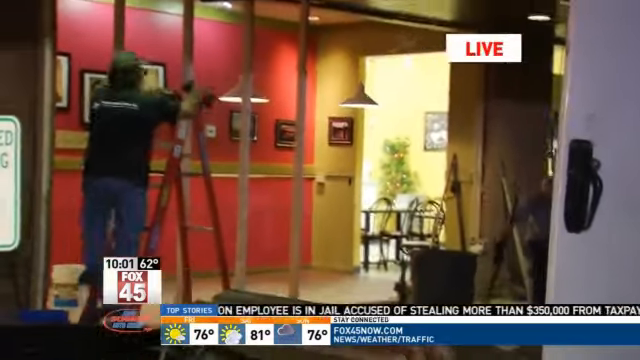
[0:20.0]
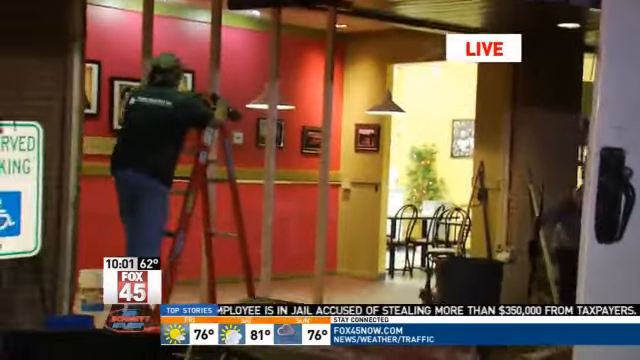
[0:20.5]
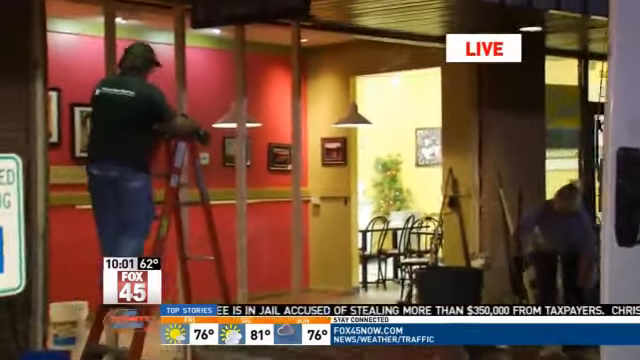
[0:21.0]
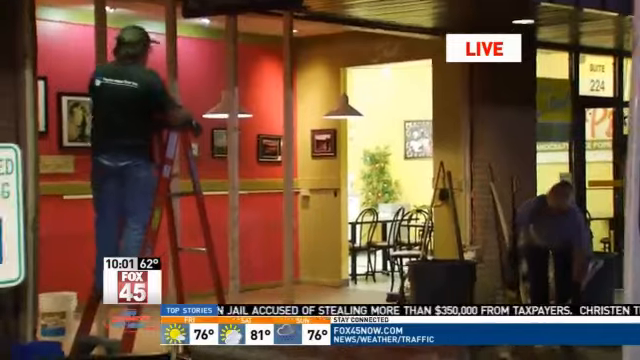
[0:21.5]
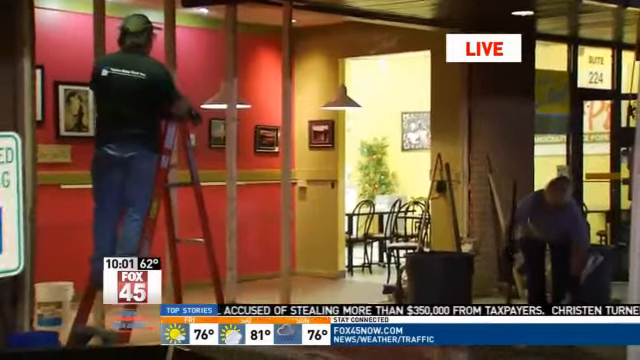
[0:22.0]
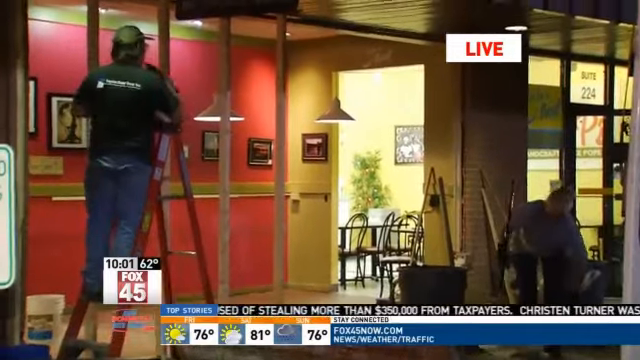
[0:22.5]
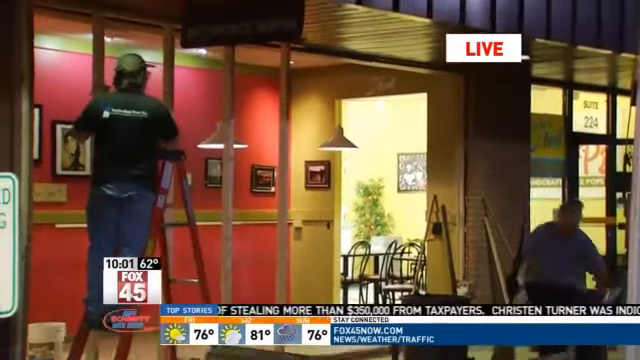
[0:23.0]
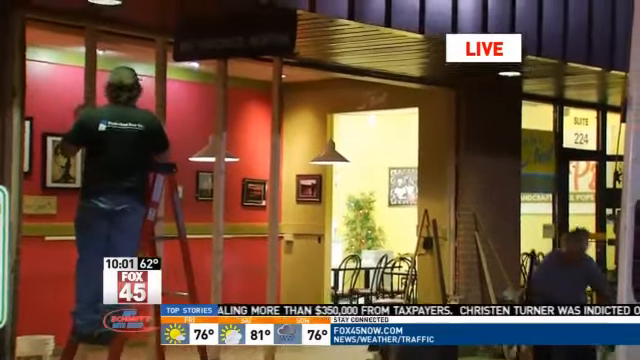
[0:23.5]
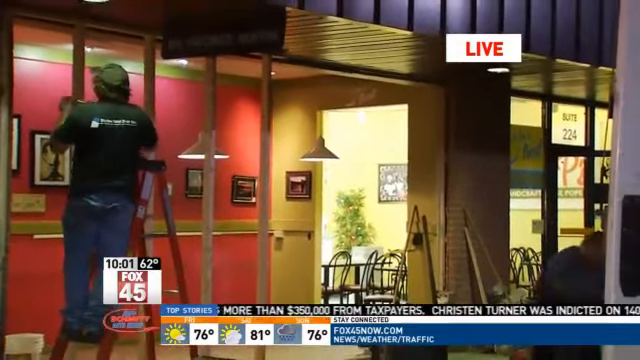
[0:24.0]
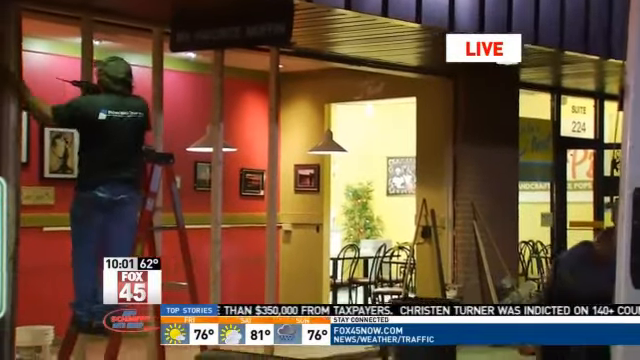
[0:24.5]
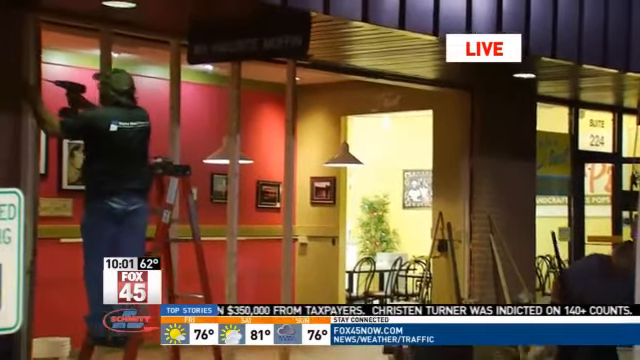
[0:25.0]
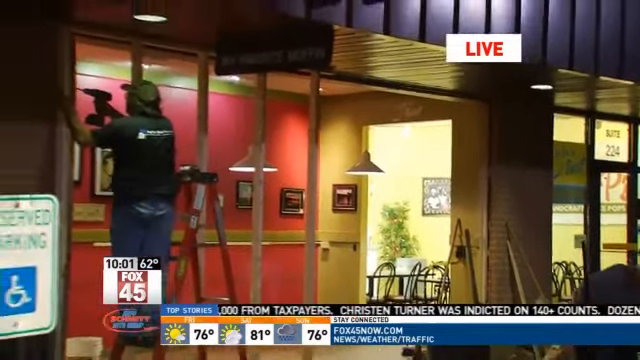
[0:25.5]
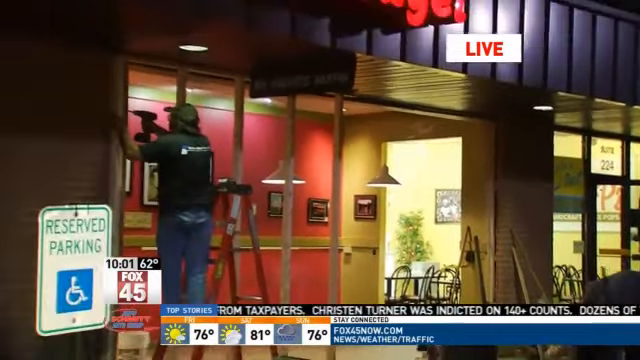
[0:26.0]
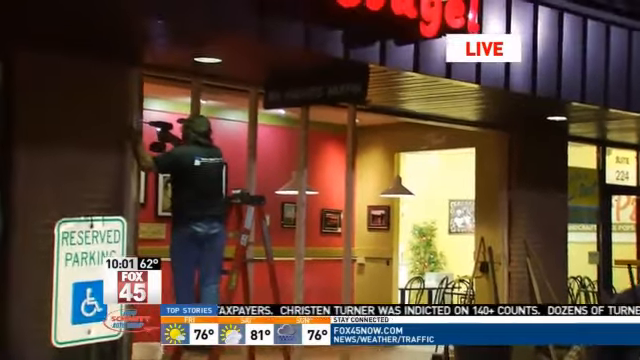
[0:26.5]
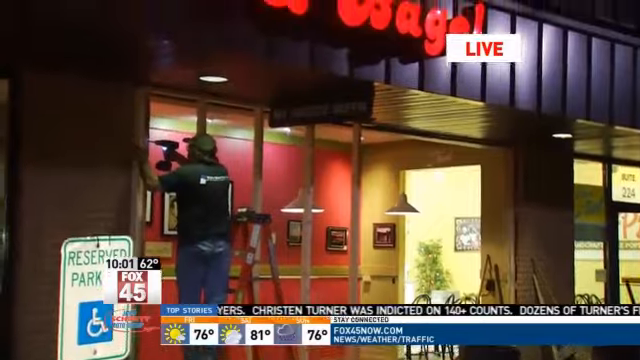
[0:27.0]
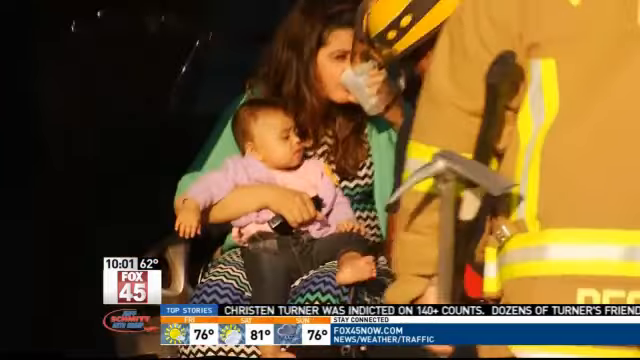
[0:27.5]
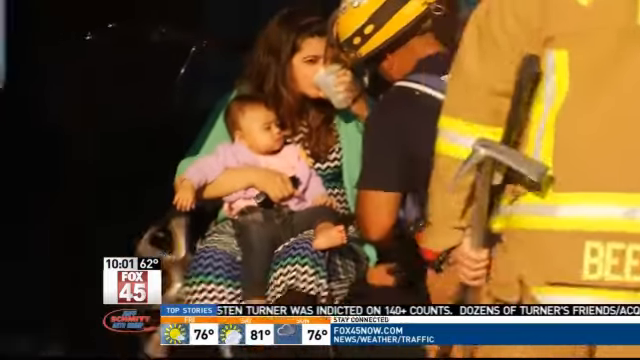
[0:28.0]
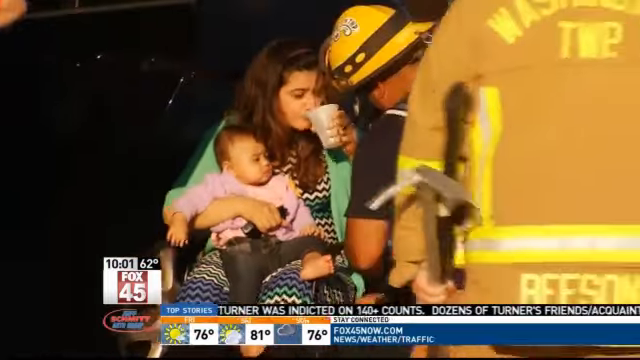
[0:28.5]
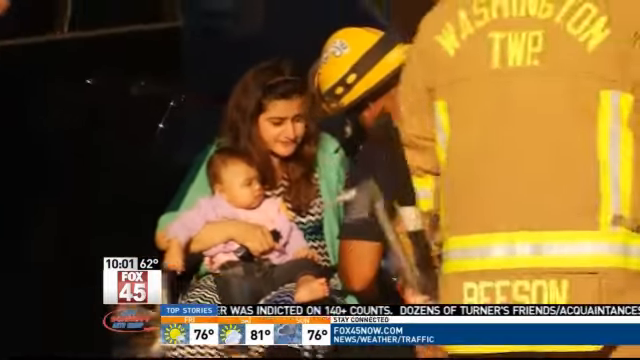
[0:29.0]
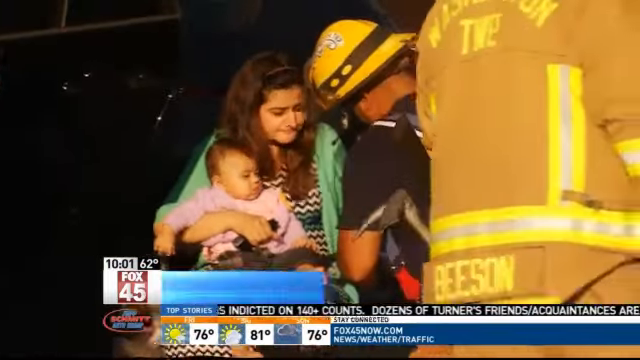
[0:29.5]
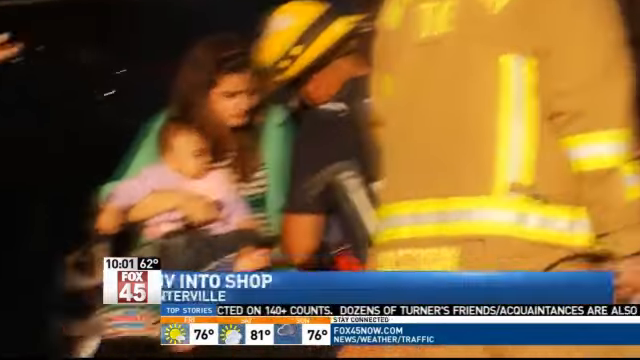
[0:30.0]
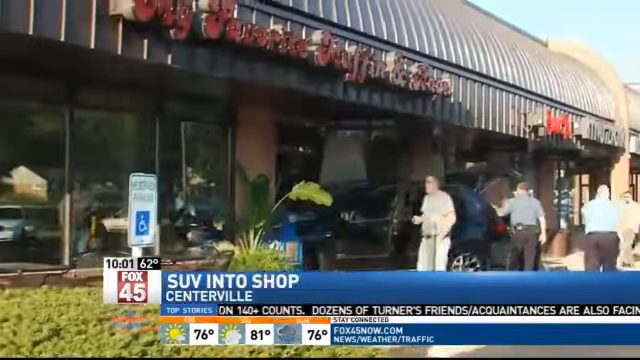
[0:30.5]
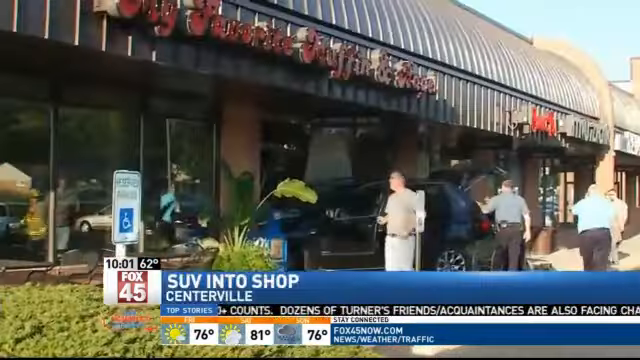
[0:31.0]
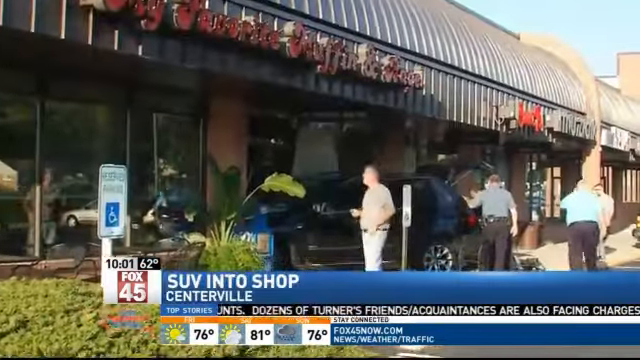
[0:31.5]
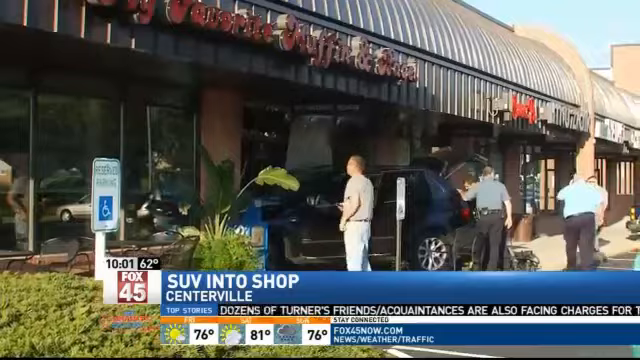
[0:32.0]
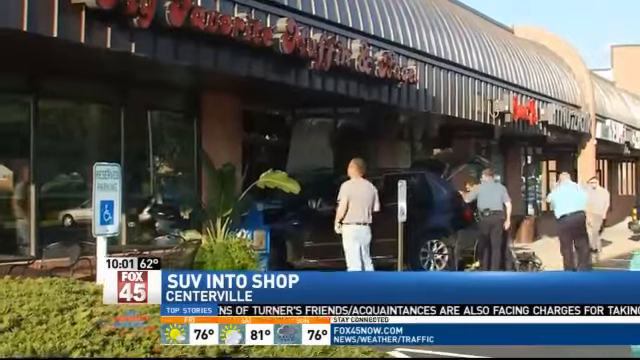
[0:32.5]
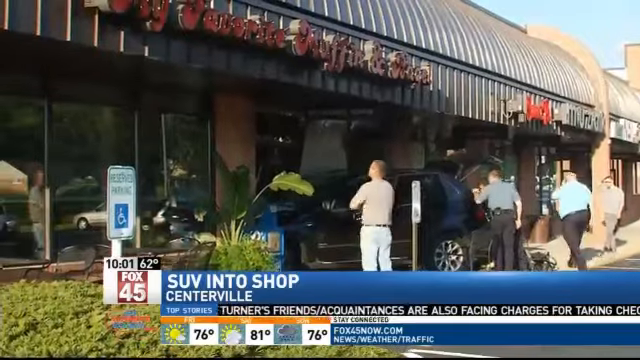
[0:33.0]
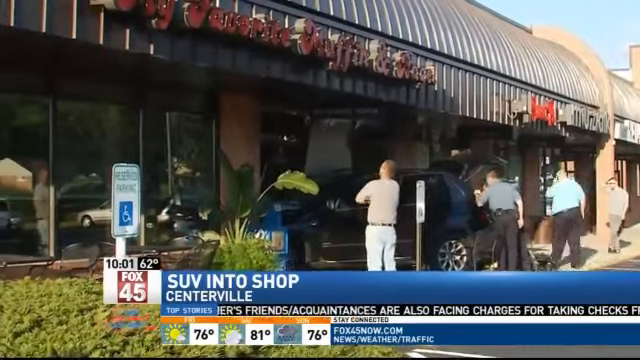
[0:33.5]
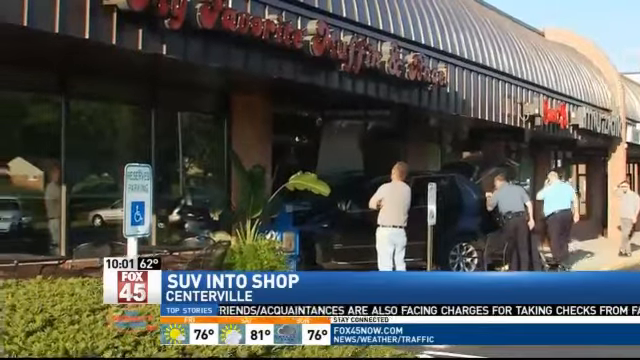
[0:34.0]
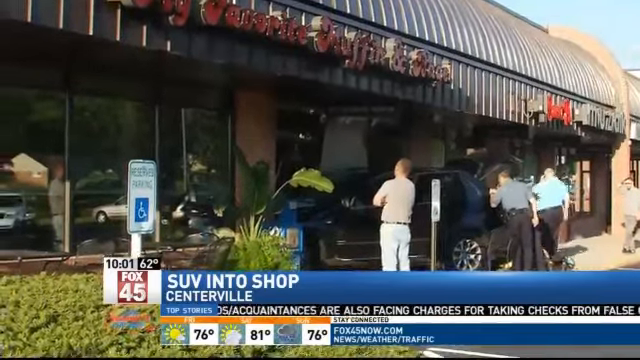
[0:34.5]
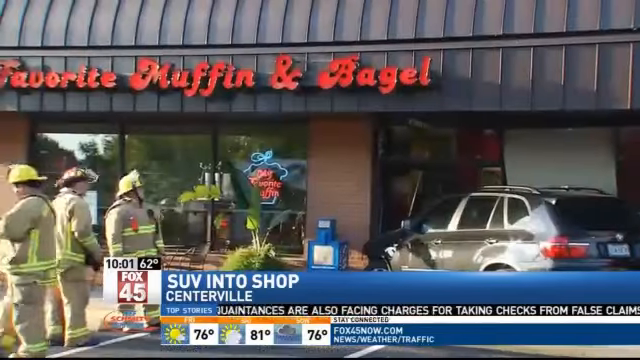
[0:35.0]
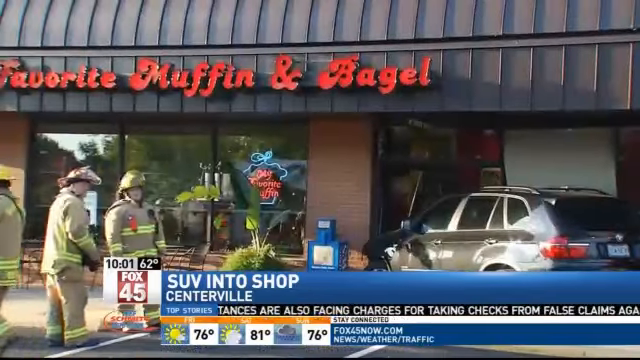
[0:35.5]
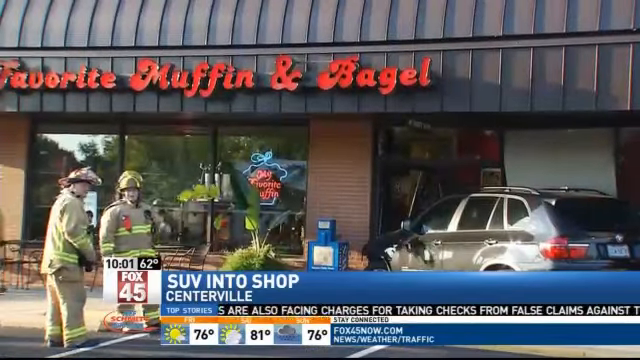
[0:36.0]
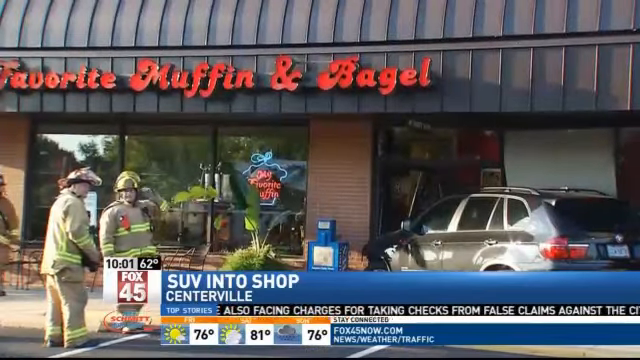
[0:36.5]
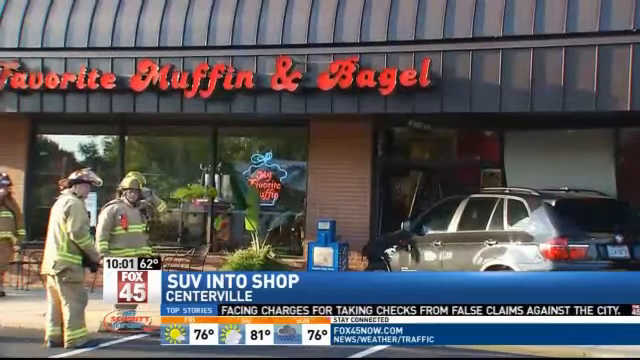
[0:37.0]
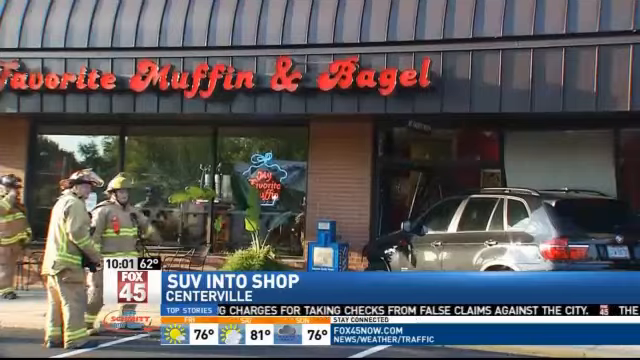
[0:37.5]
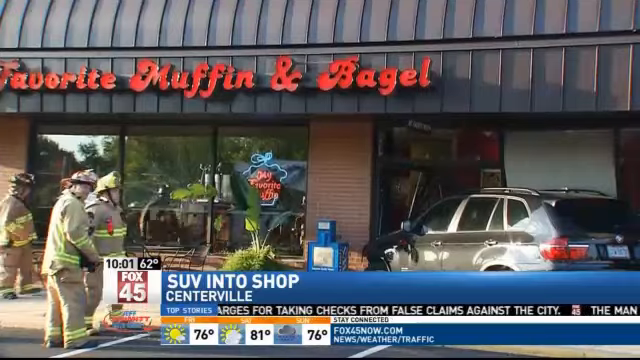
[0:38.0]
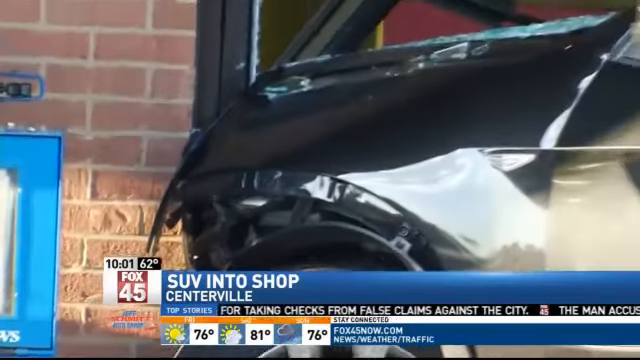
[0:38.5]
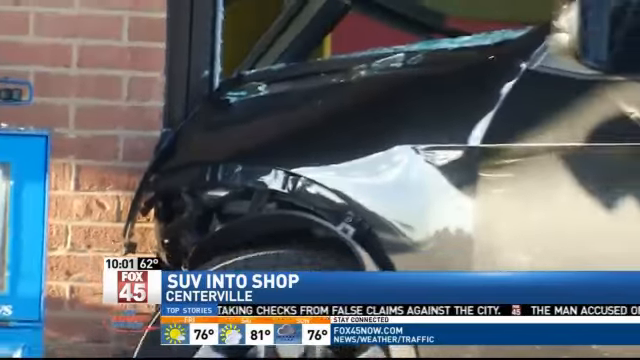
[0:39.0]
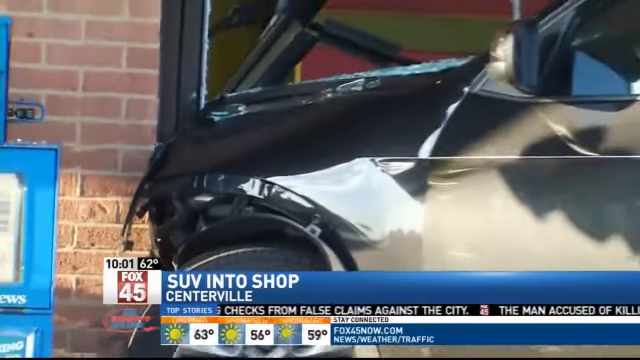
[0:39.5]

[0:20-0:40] Men are repairing a store, putting beams in vertically. A man on a ladder holds a drill, and another man is on the right-hand side. A woman with a baby on her lap appears to be attended to by medical EMS. The outside of the store is shown, with its name, "Favorite Muffin and Bagel", in red at the top. A black SUV is halfway into the shop, its front end damaged; the car has driven through the front of the store. A fireman and police are outside, and the police are looking in the back of the car. It looks like nighttime during the rebuilding of the shop, but it looks like daytime in the shots of the car. When the car that plowed into the shop is shown, a white rectangle with the word "live" on it is on screen.